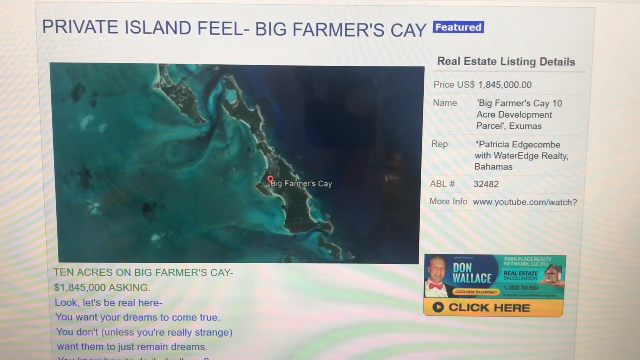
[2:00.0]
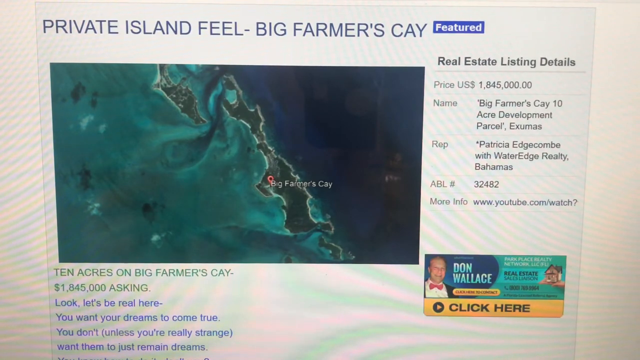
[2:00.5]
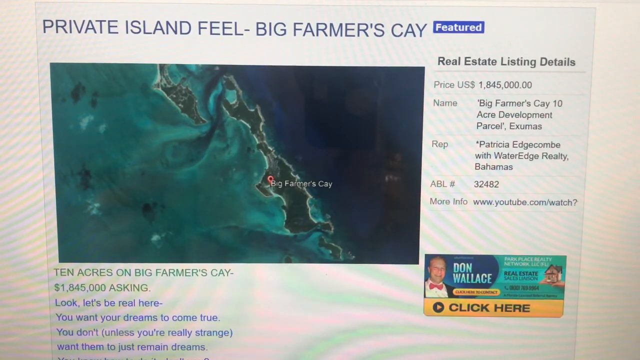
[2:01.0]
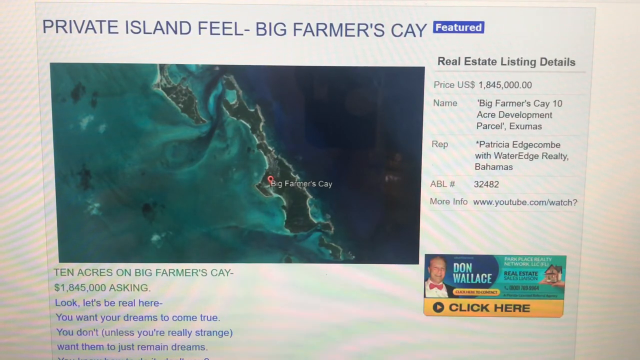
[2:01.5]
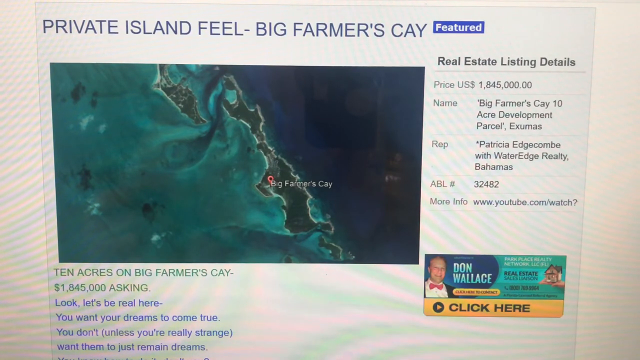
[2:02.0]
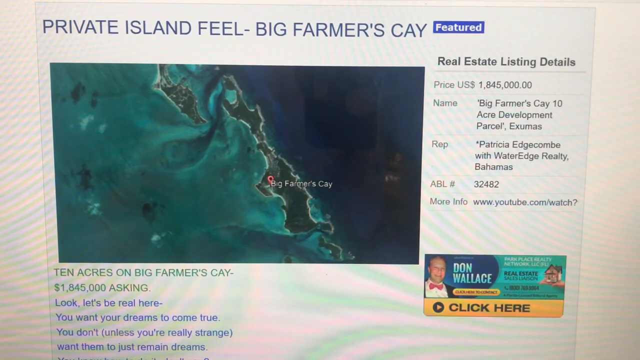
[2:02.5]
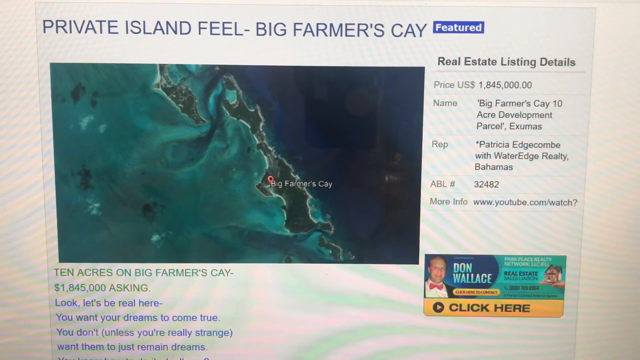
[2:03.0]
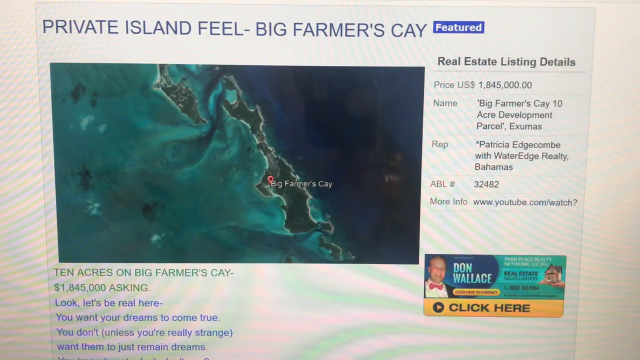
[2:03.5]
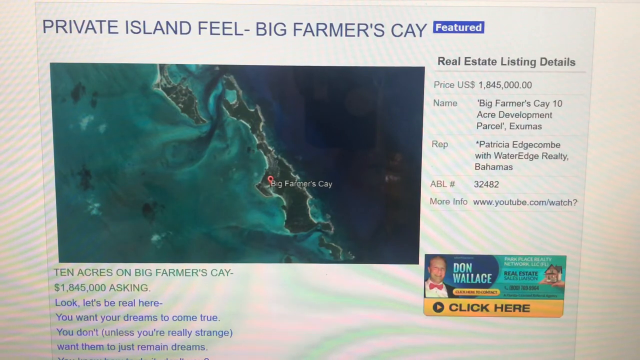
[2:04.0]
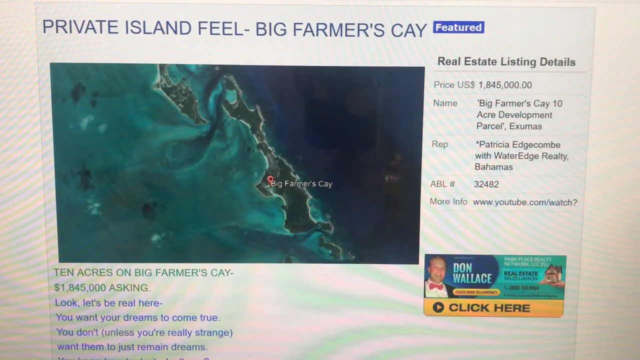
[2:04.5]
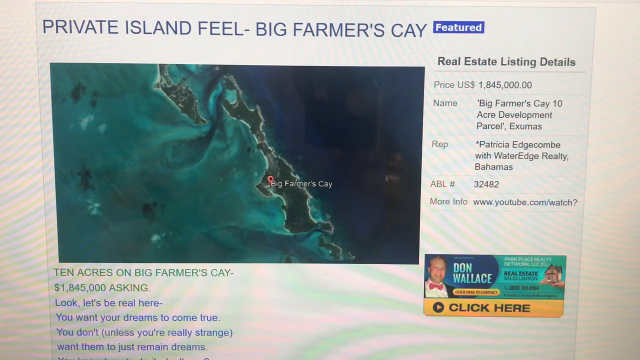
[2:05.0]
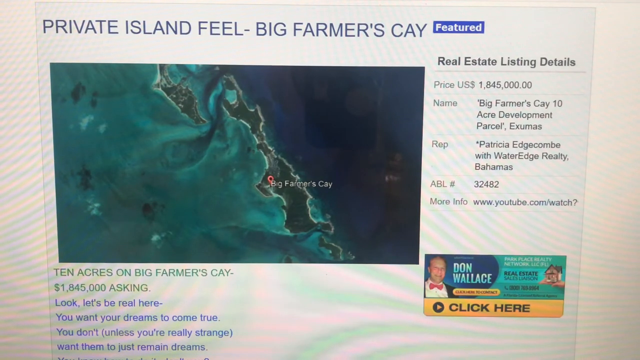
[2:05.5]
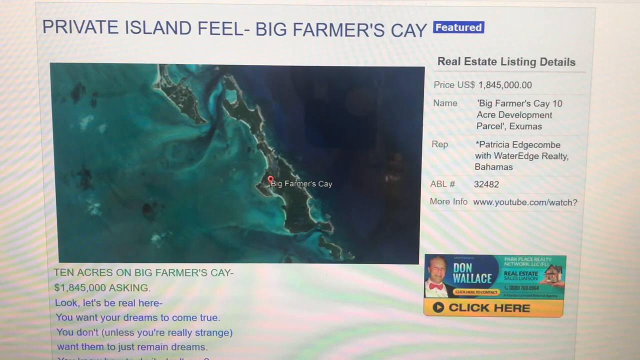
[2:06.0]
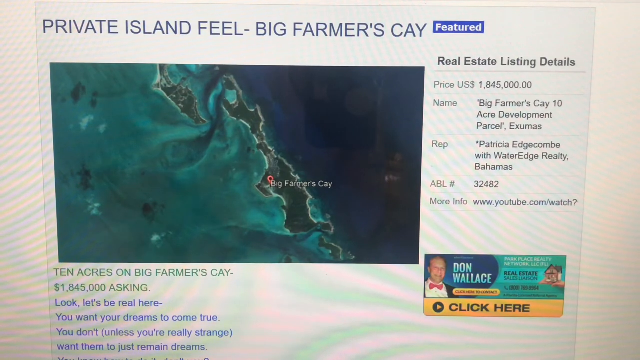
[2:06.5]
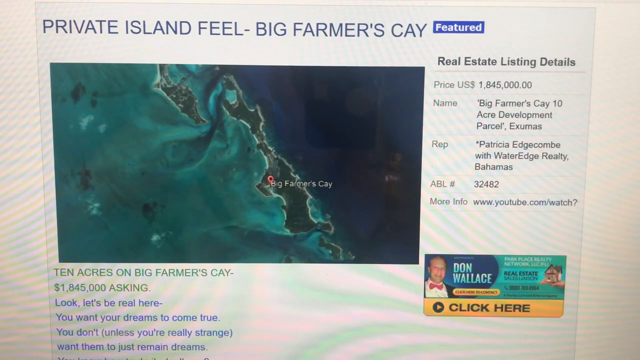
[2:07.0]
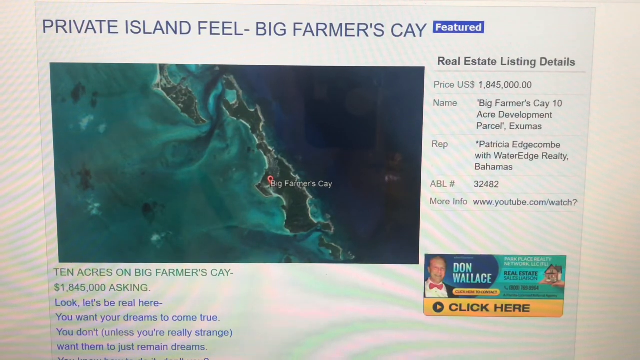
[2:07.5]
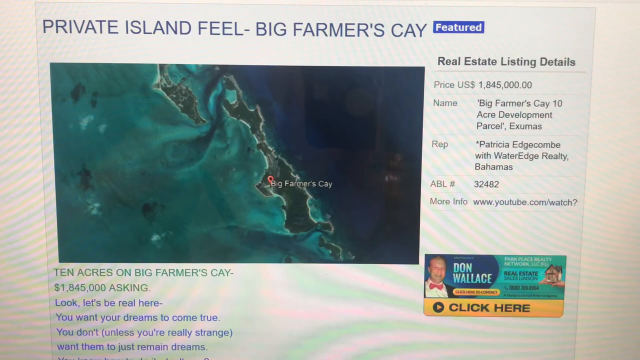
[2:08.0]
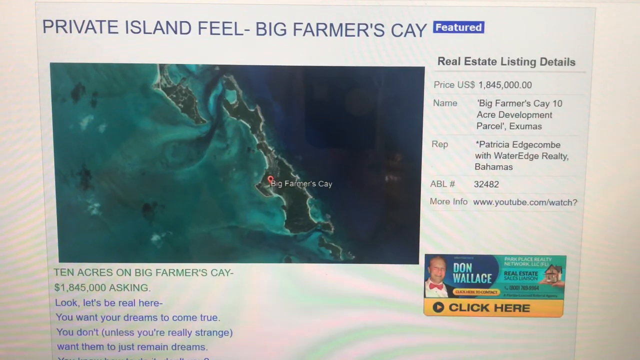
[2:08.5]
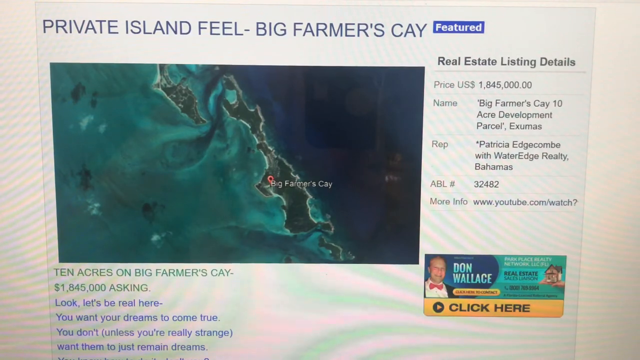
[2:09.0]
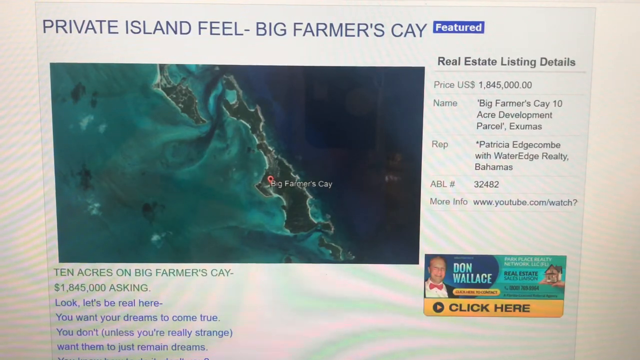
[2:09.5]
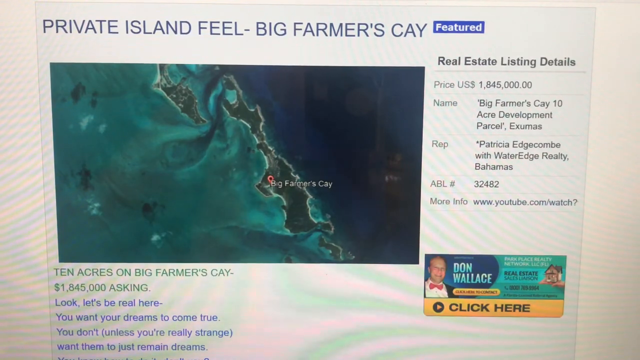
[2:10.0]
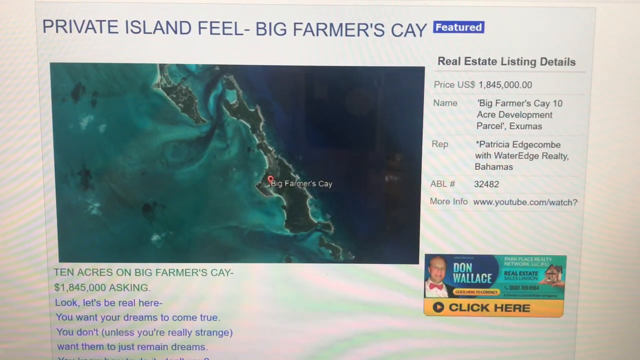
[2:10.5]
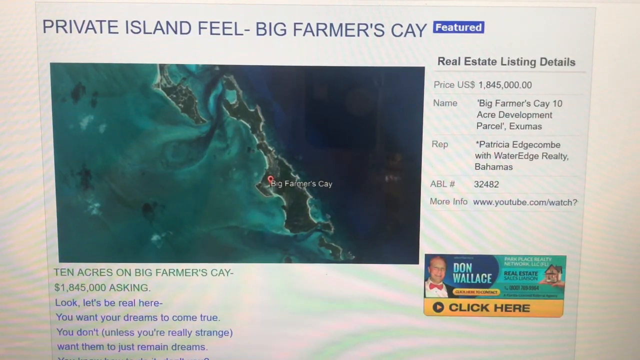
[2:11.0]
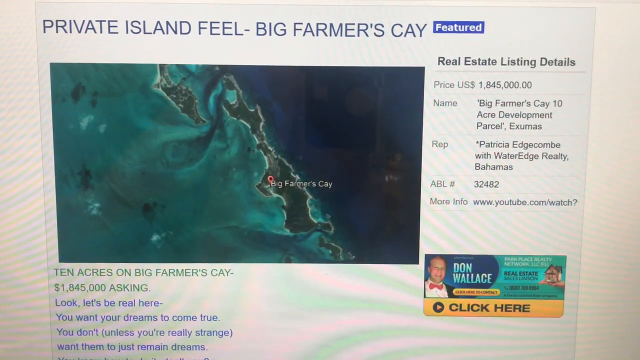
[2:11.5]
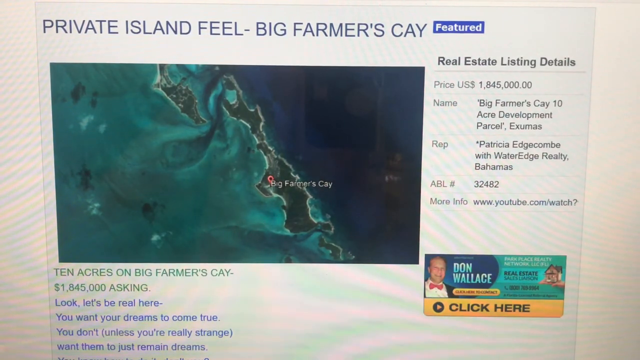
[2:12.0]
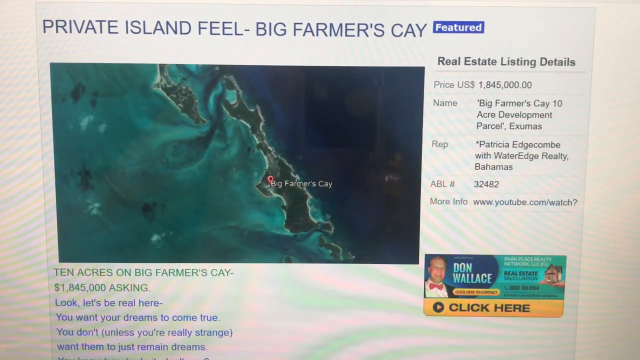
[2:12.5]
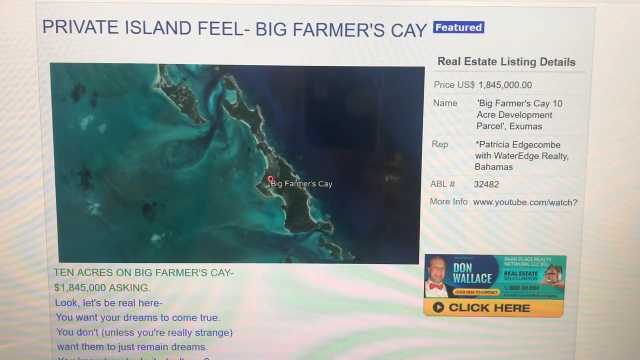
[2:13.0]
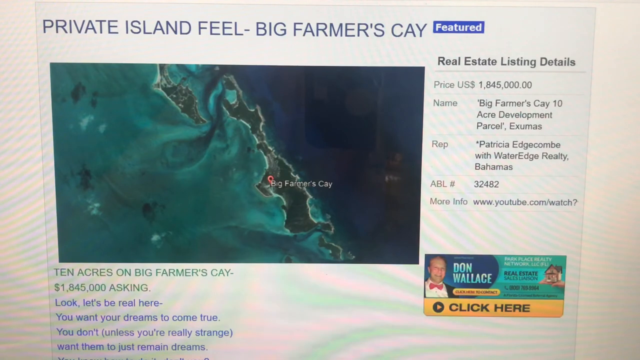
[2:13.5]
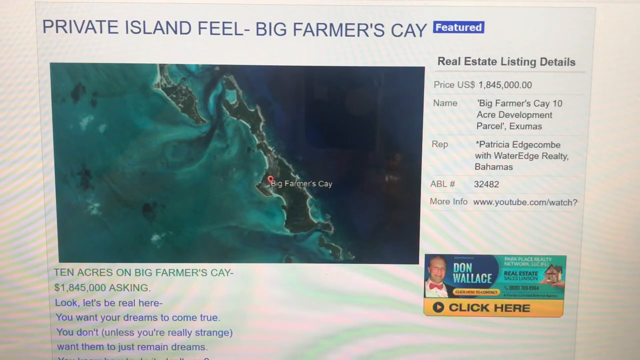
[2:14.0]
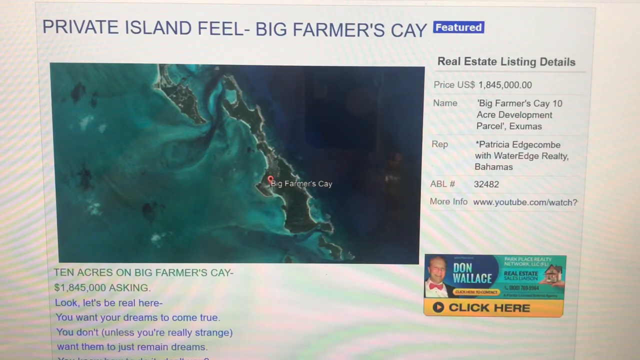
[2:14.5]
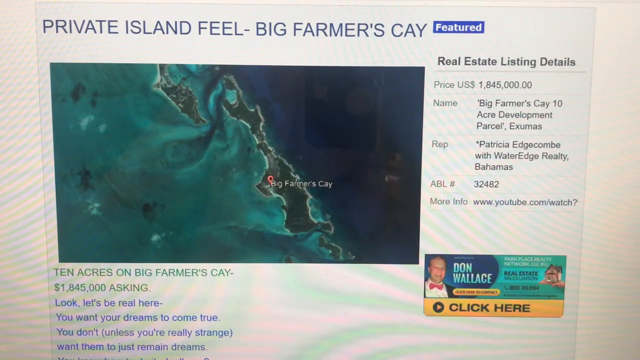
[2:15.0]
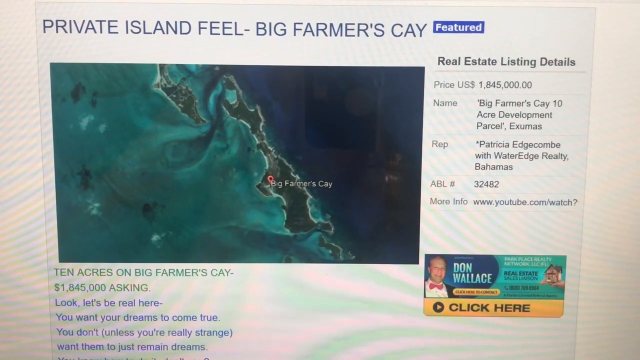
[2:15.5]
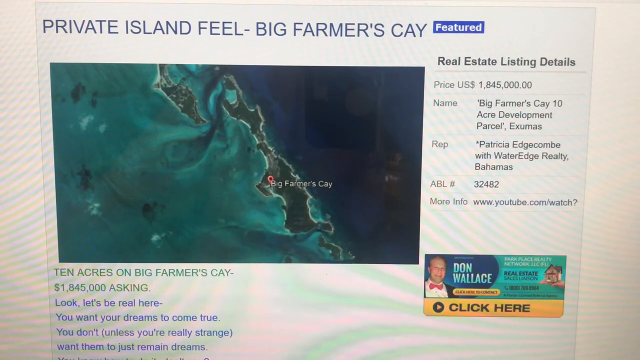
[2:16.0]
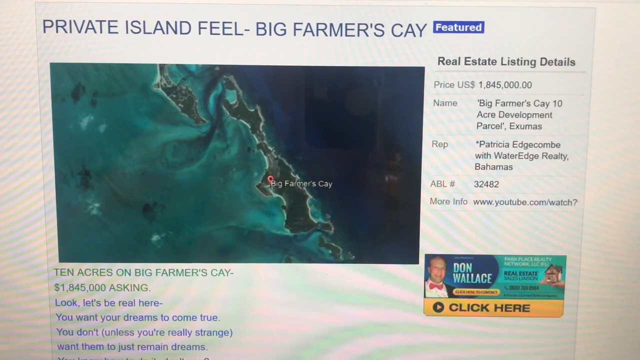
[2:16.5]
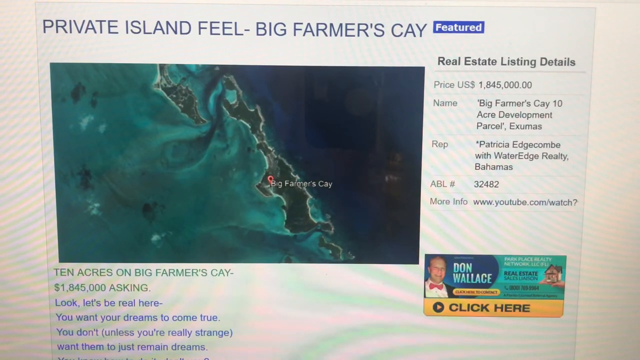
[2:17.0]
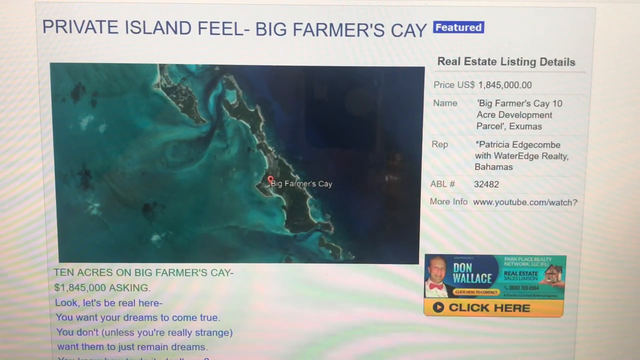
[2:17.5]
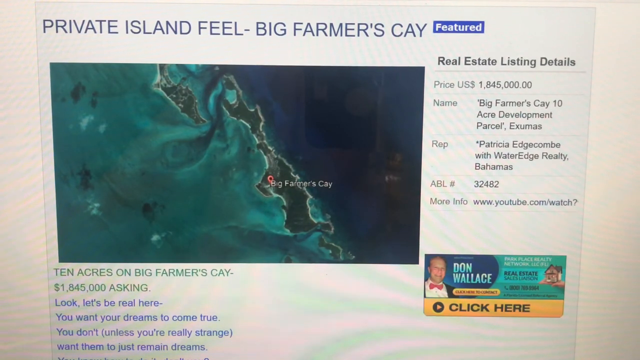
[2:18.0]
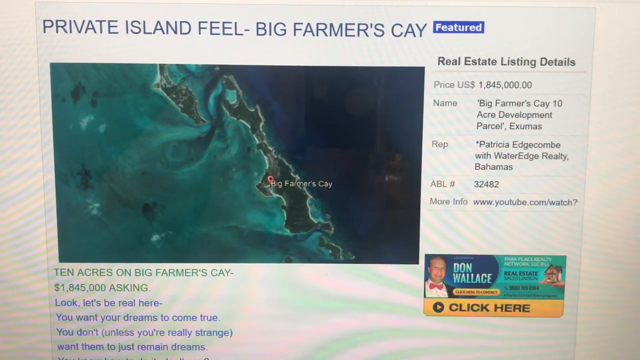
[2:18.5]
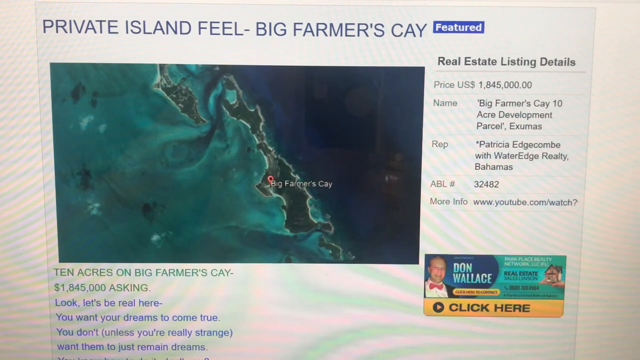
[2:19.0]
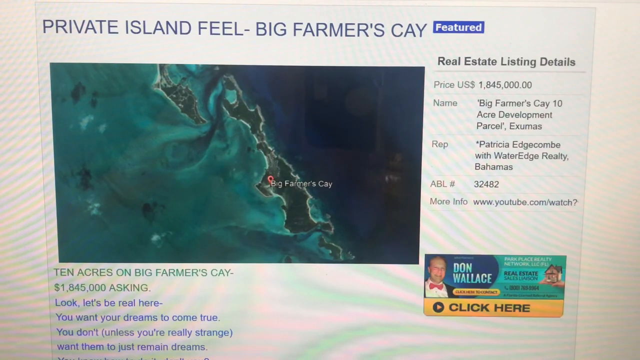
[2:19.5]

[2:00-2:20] The computer screen shows what the person behind the camera is doing. The pen is on the left side; they hold it with the right hand, then the left hand, then the right hand again, rotating it as if confused or waiting. Part of their body is reflected on the blue ocean part of the image, and there is slight movement of their hand on the left, as if extending it to catch something; the movements are faint because the image is very dark. The site has a simple white page background with some text on it, and a feature is written at the top right in a blue font, possibly a paid promotion.